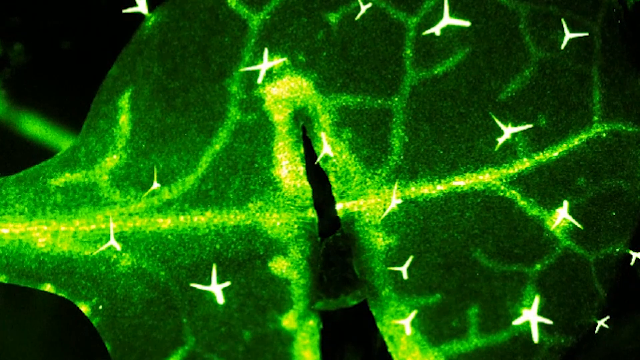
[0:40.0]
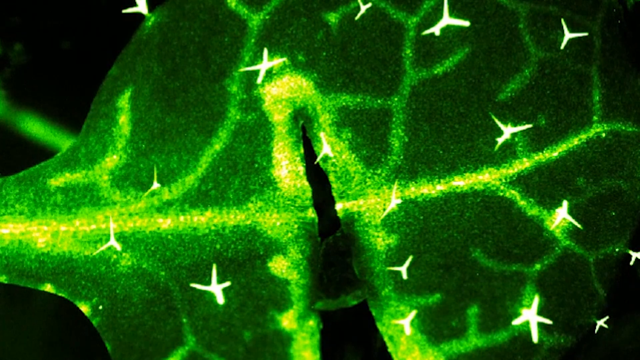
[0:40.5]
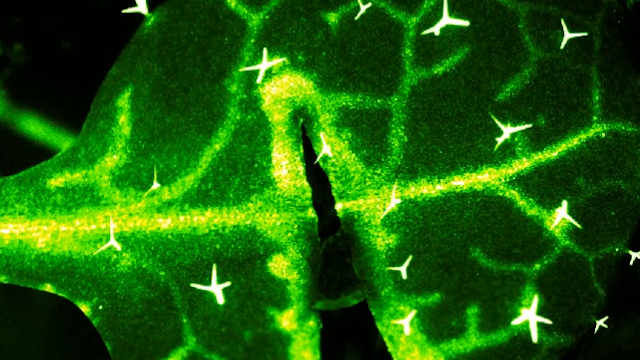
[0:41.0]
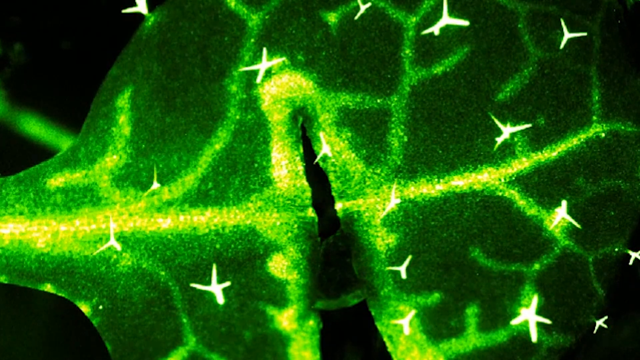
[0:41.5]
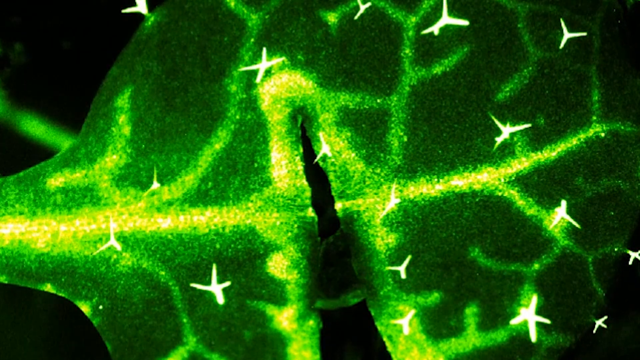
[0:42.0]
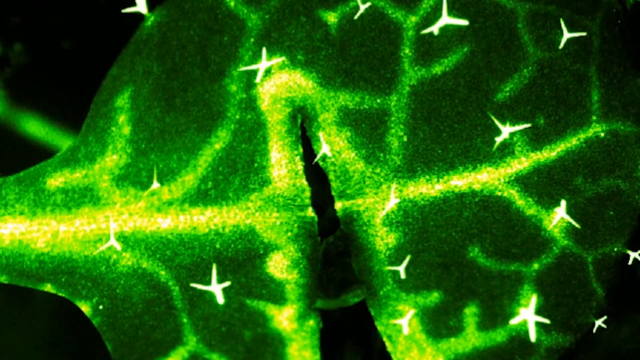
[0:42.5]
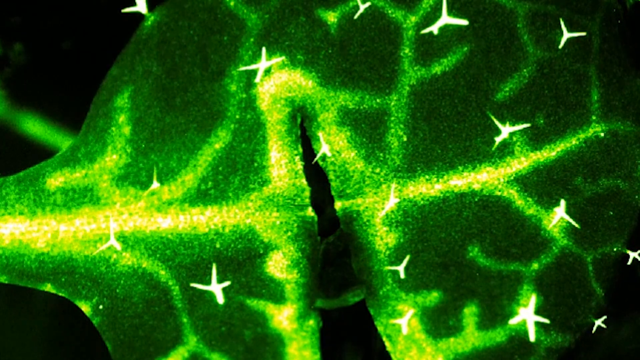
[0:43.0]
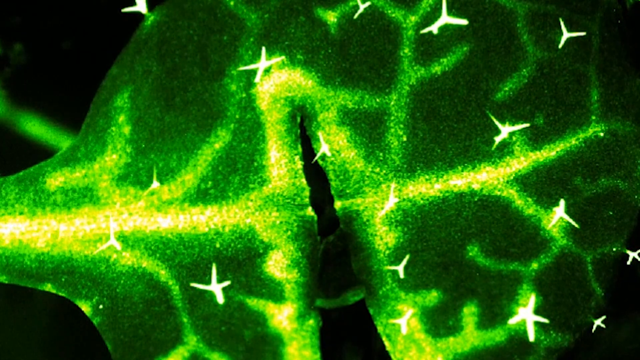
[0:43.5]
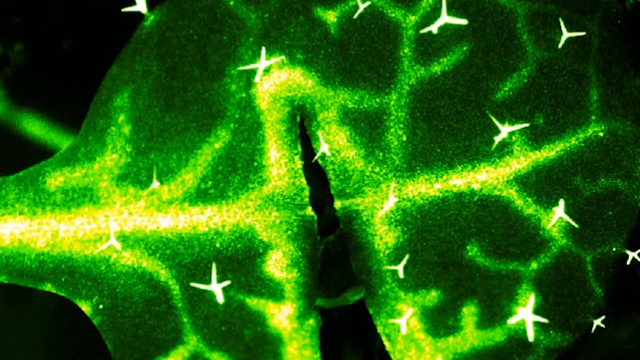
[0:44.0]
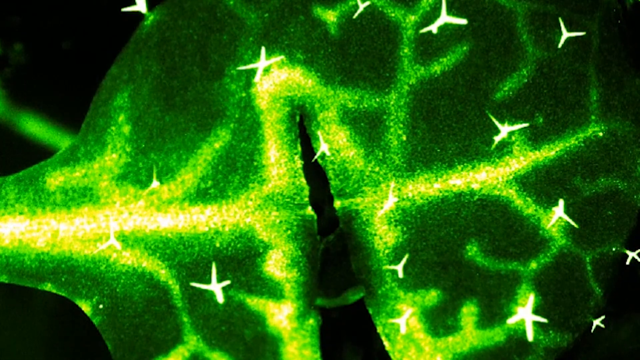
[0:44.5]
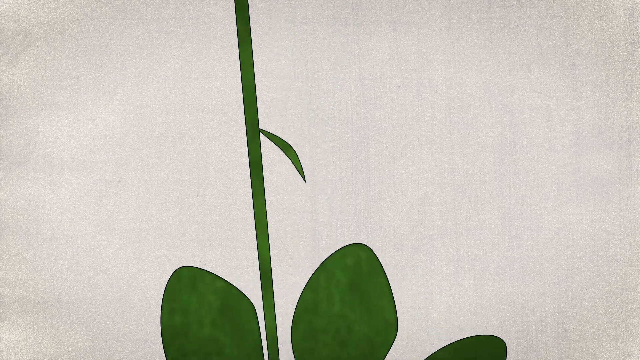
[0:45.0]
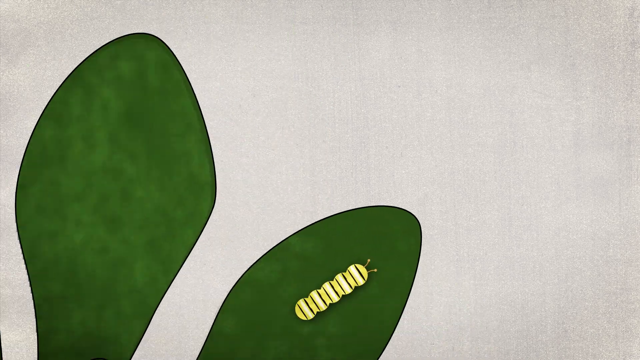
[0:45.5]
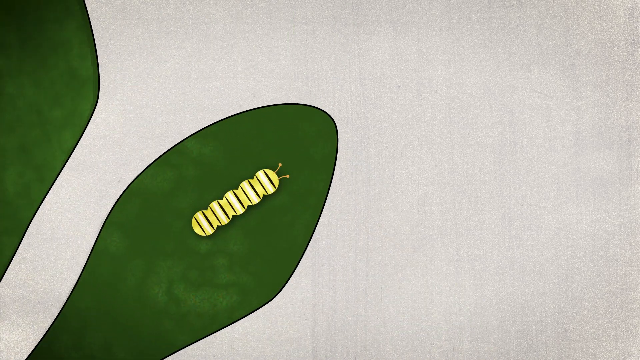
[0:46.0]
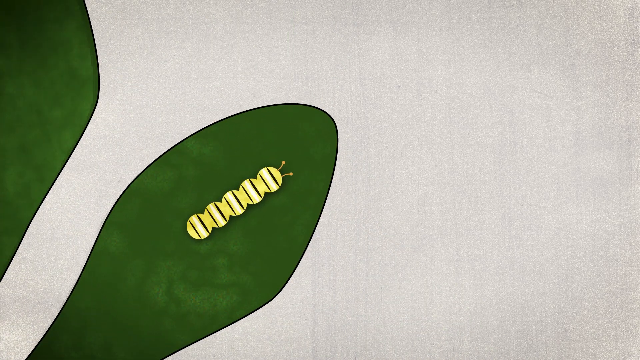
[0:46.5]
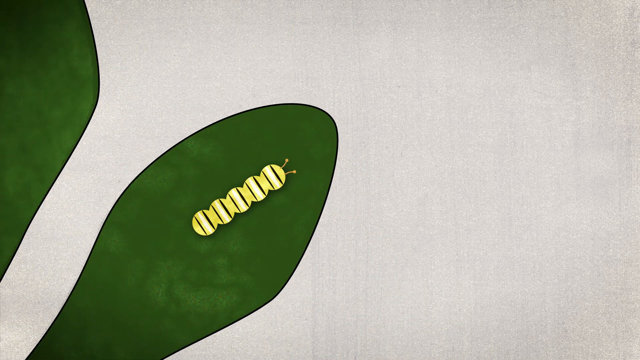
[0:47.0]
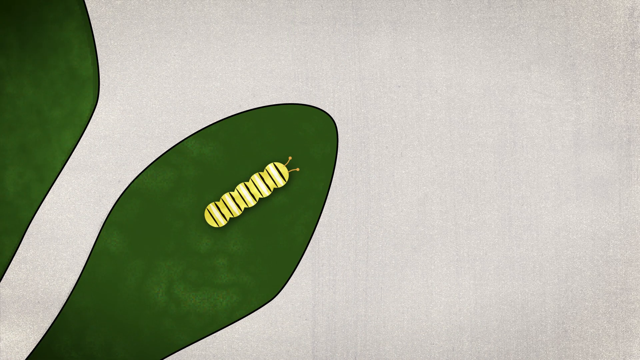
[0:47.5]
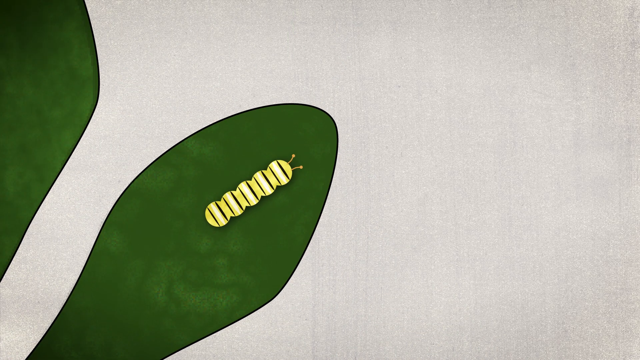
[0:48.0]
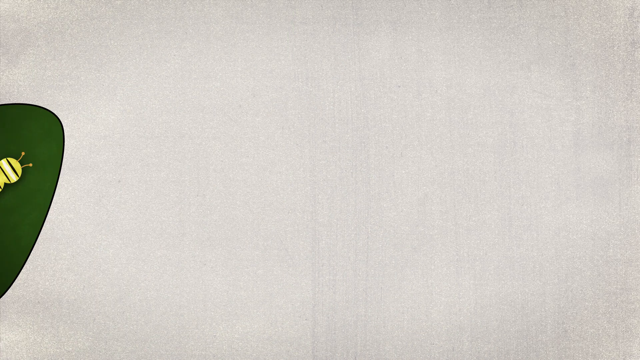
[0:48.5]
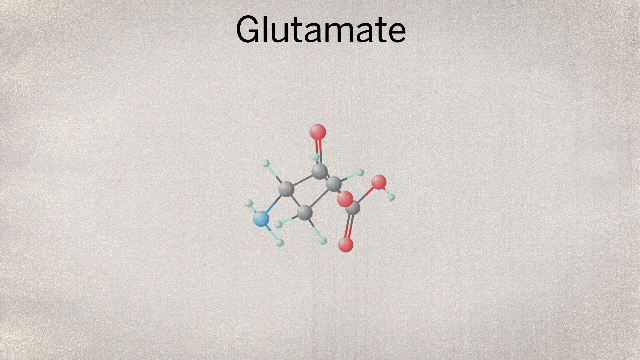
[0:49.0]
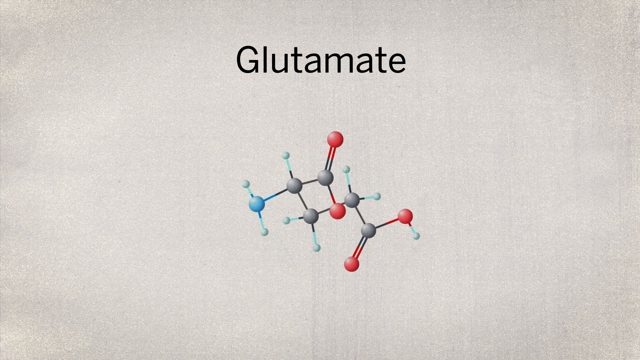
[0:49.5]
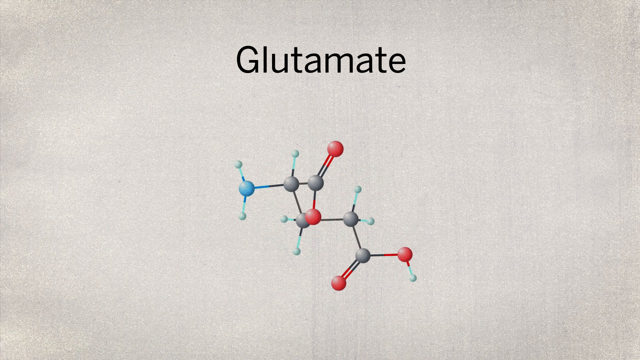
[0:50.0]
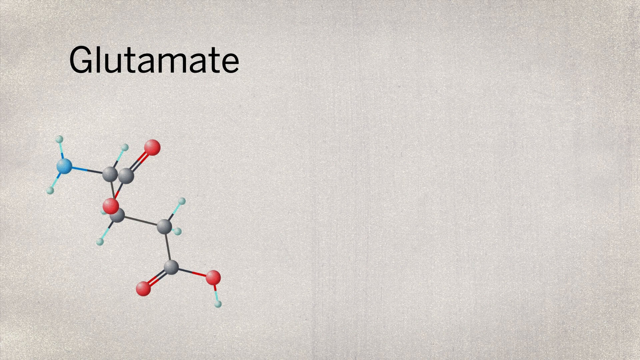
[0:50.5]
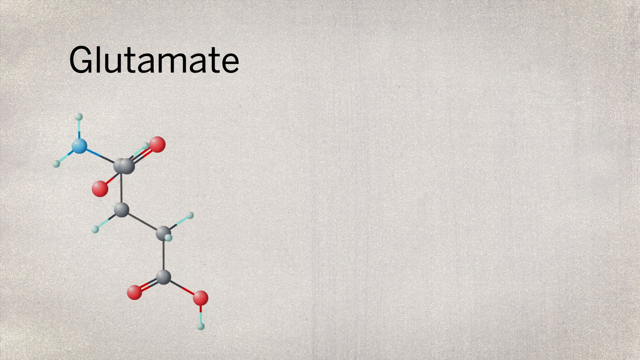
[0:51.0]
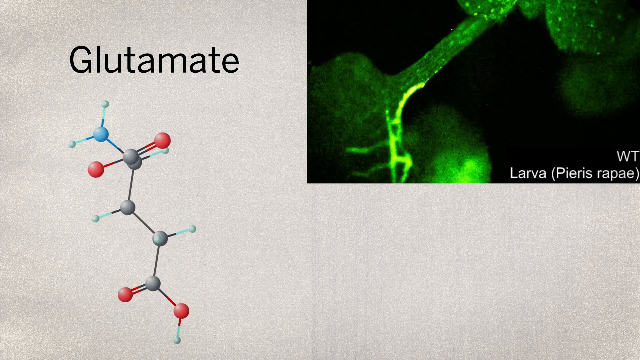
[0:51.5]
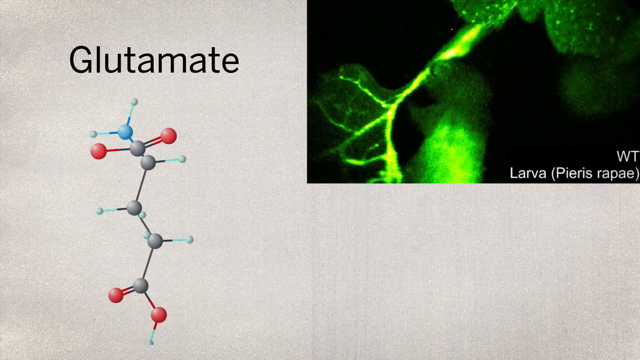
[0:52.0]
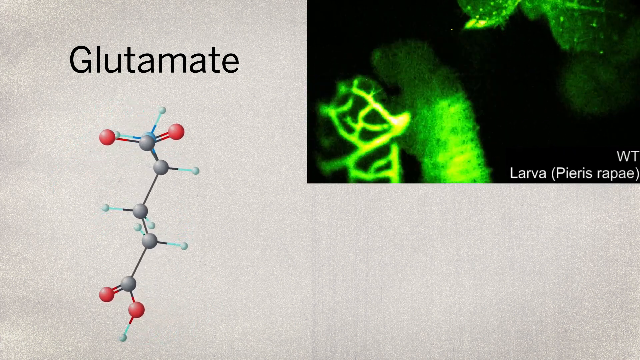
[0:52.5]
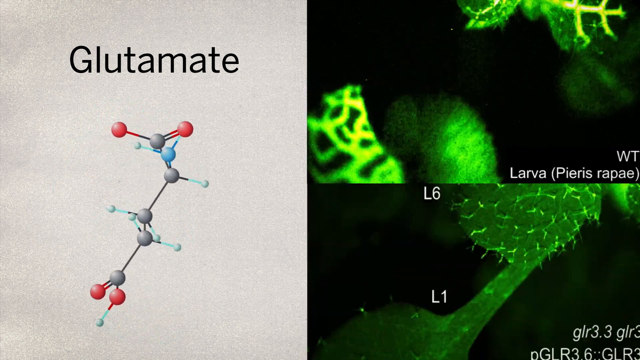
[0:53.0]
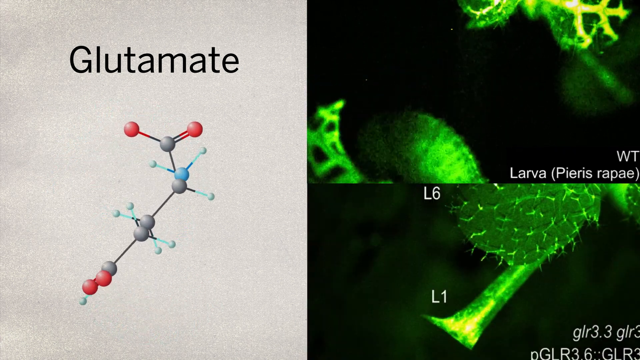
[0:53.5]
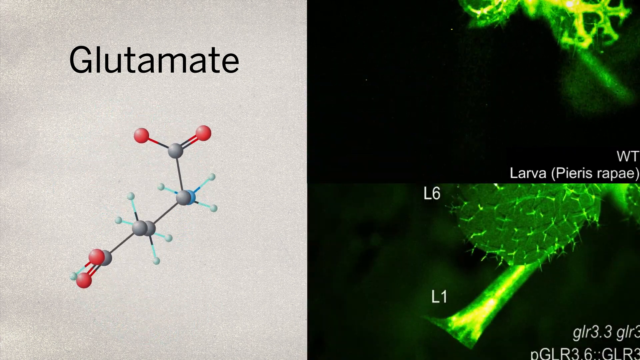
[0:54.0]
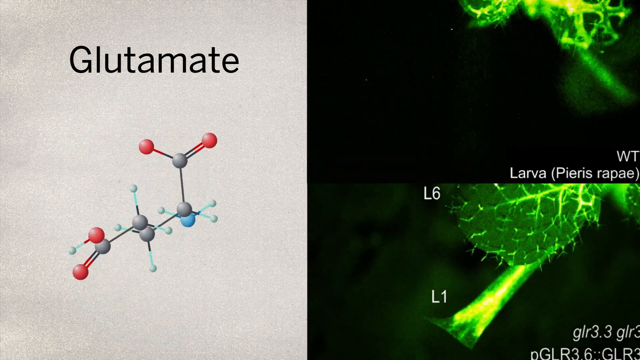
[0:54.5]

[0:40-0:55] A plant leaf is shown under intense magnification using special imaging technology, seemingly aimed at demonstrating that plants have their own kind of nervous system. Next, an animated caterpillar appears on a plant leaf, followed by a glutamate molecule, shown as still images. The setting seems to be a lab, while the animated part is an illustration with no real setting.